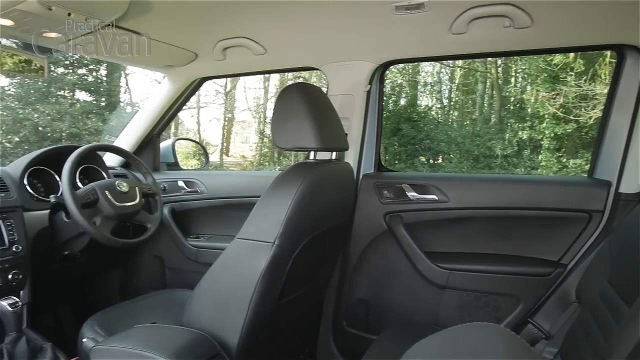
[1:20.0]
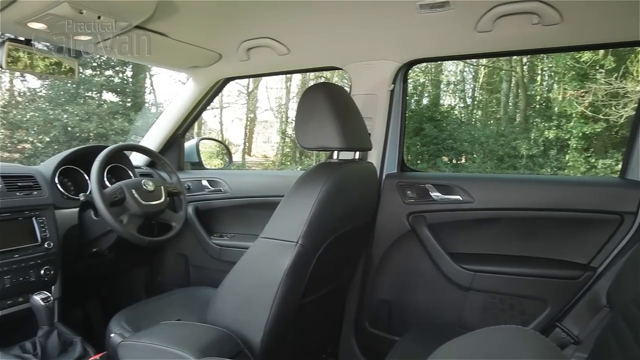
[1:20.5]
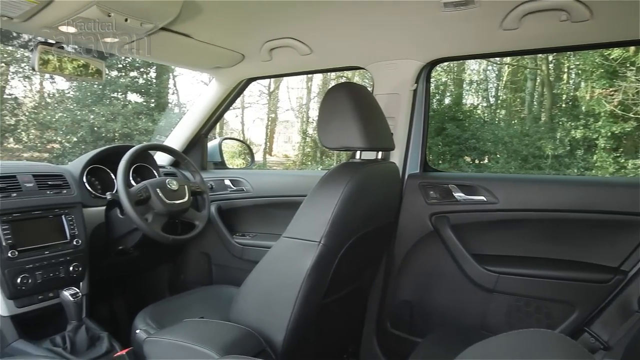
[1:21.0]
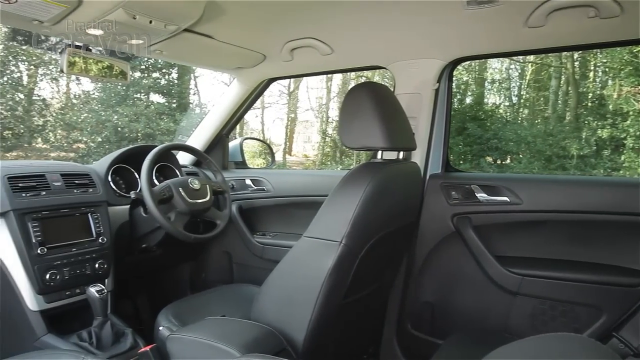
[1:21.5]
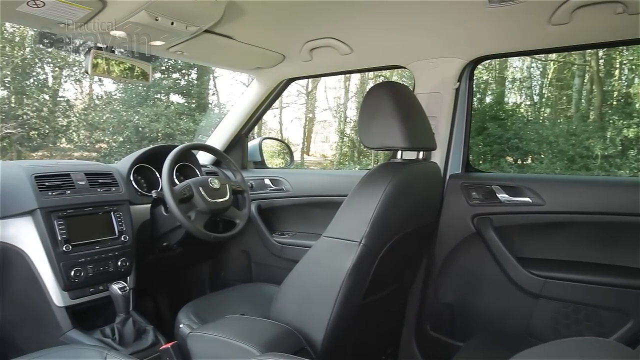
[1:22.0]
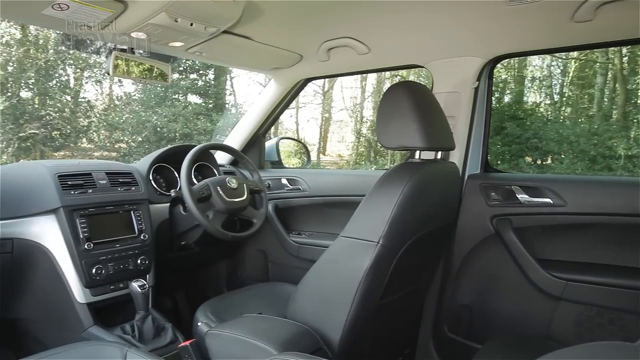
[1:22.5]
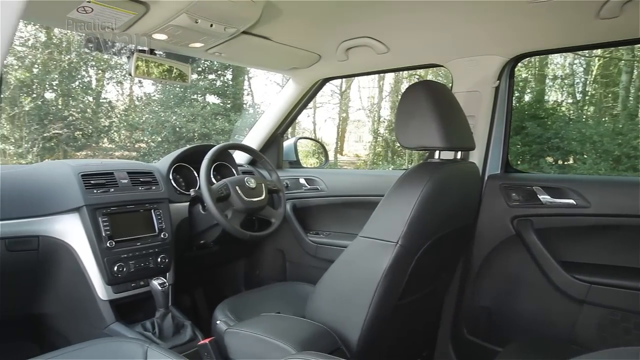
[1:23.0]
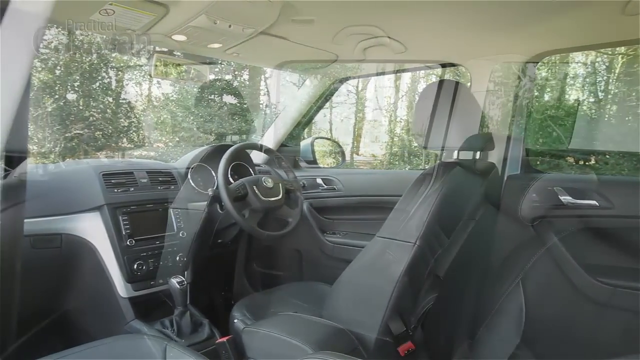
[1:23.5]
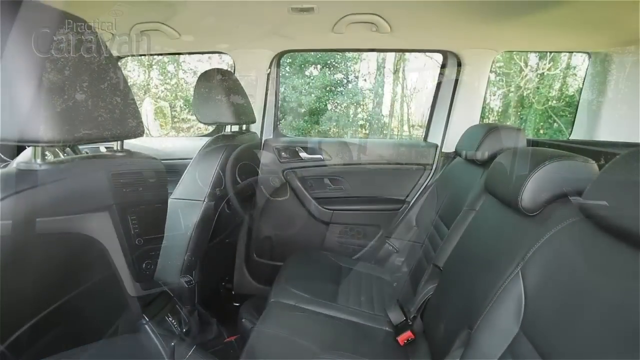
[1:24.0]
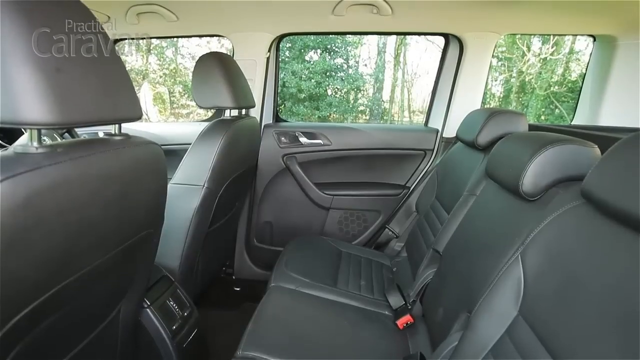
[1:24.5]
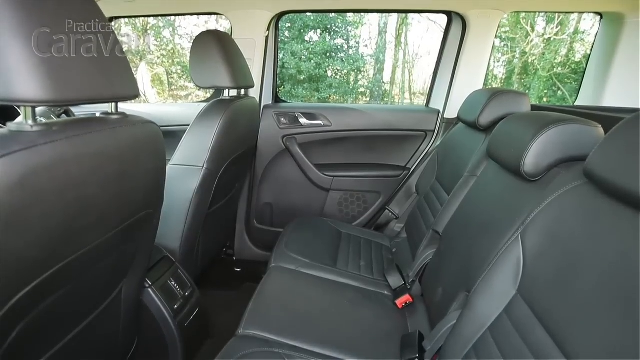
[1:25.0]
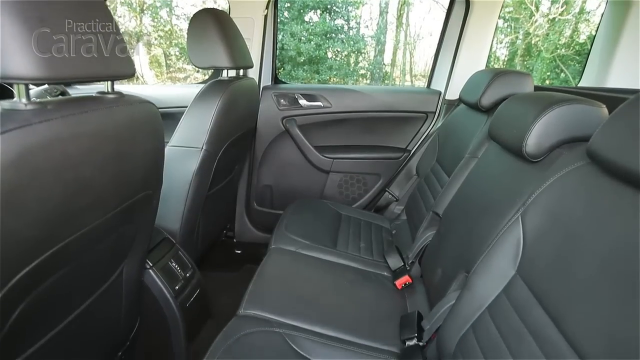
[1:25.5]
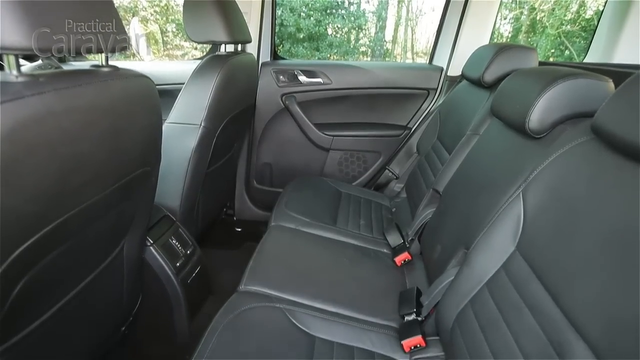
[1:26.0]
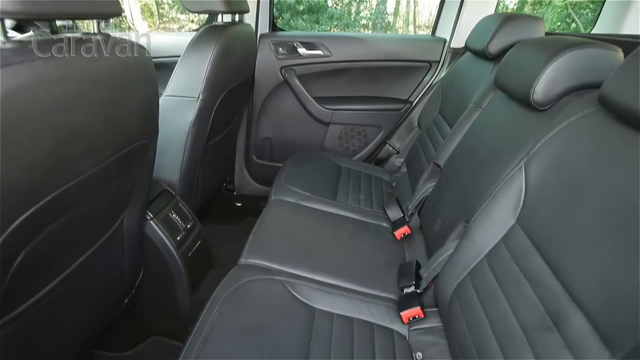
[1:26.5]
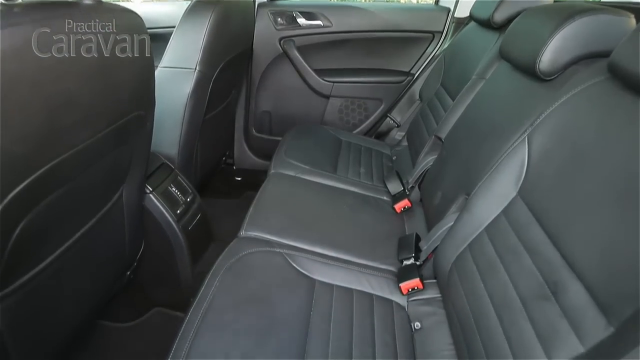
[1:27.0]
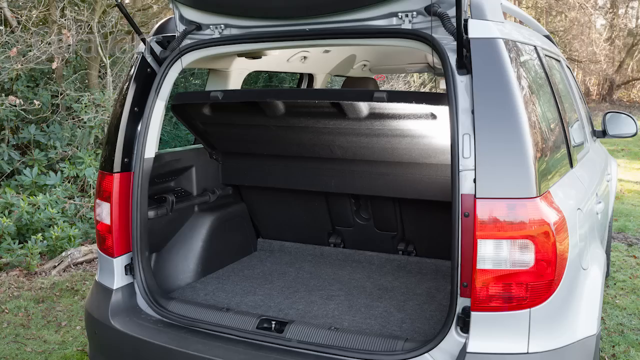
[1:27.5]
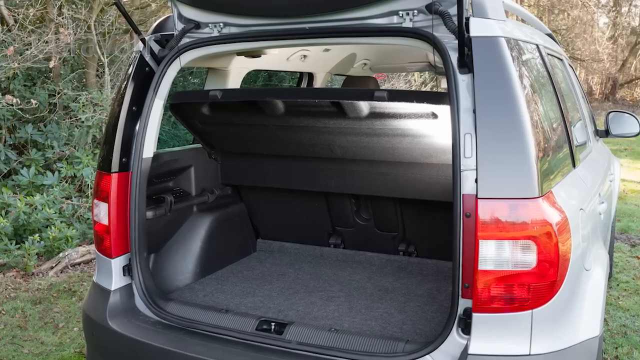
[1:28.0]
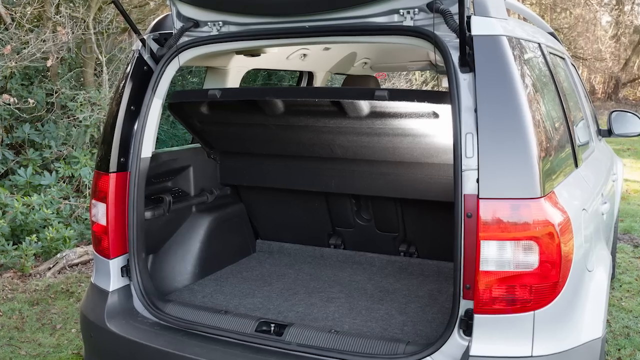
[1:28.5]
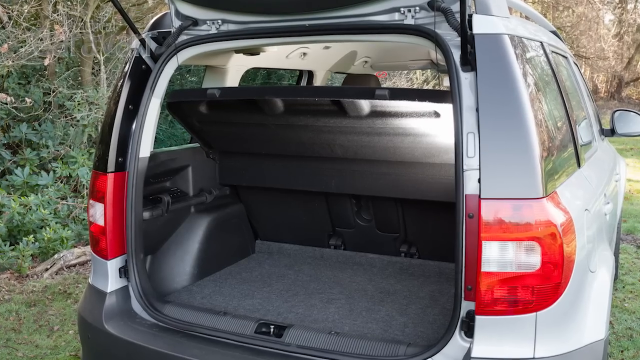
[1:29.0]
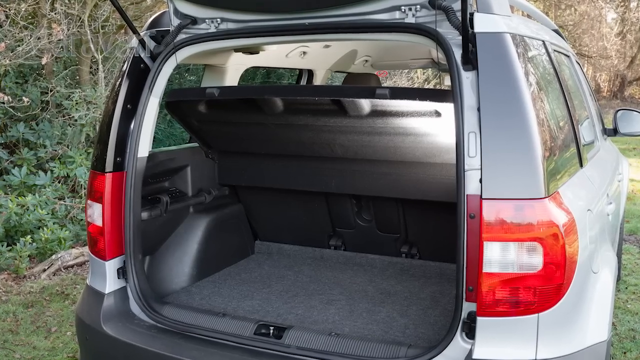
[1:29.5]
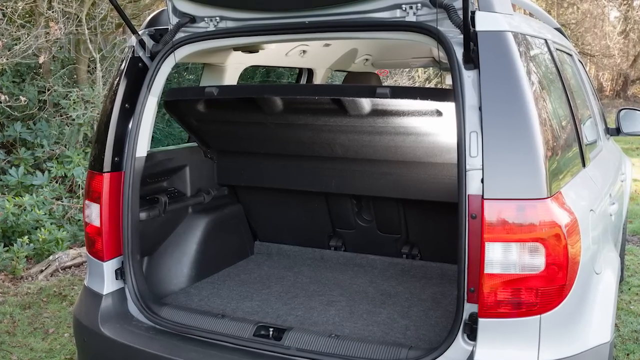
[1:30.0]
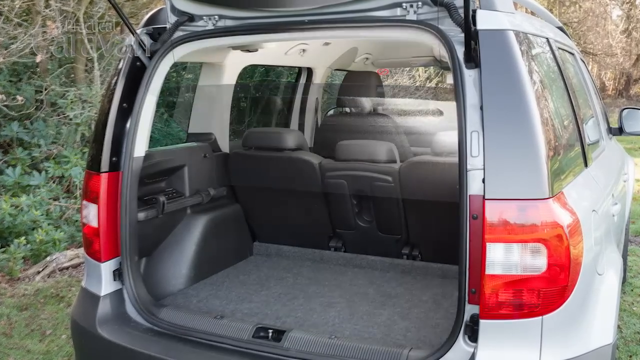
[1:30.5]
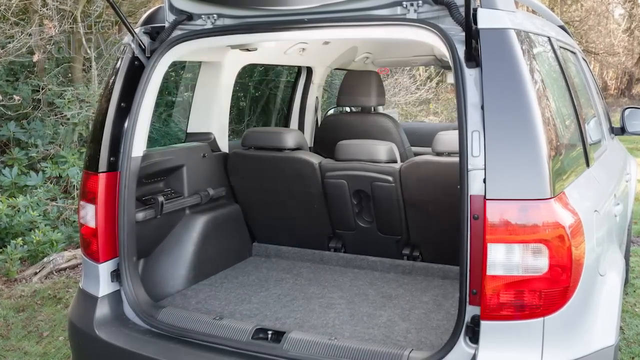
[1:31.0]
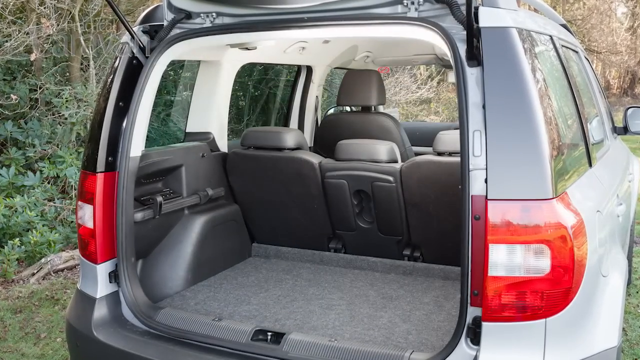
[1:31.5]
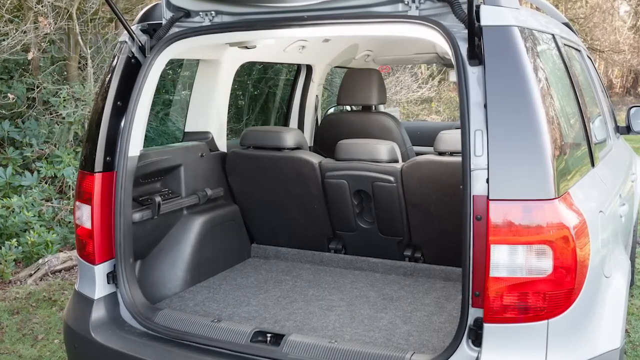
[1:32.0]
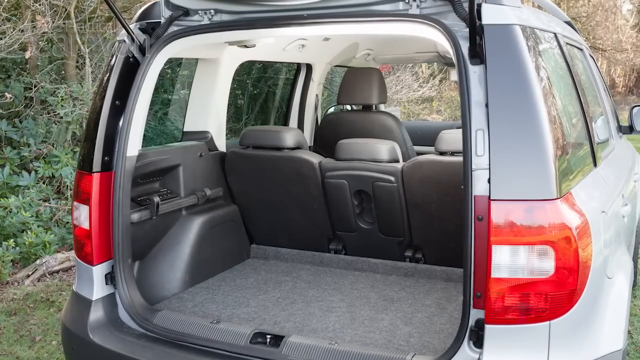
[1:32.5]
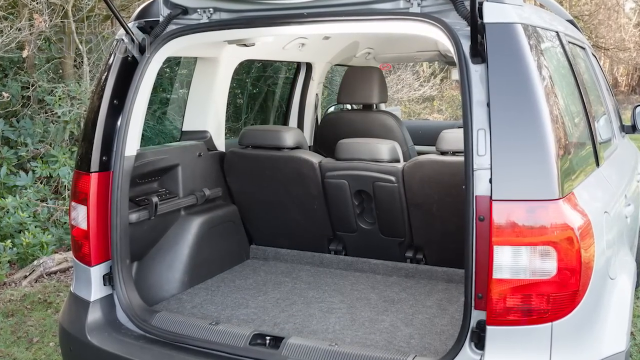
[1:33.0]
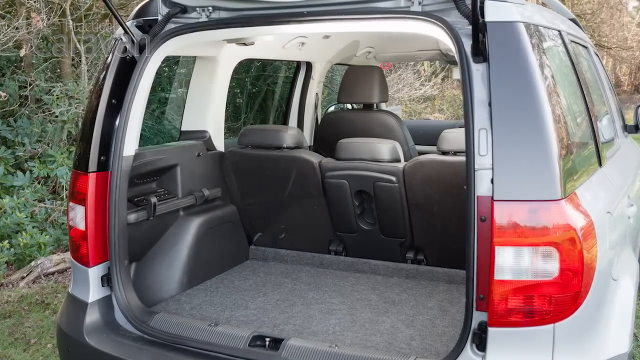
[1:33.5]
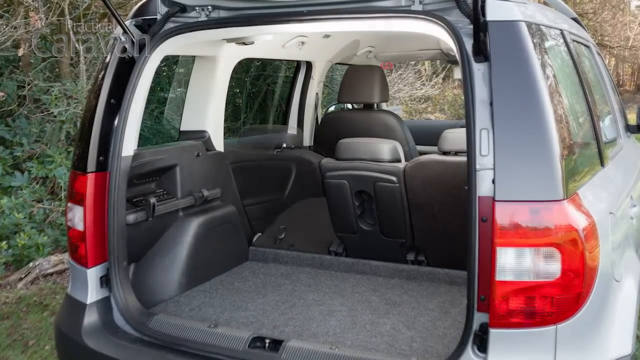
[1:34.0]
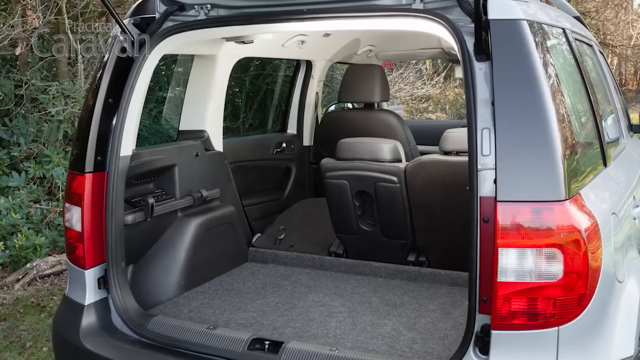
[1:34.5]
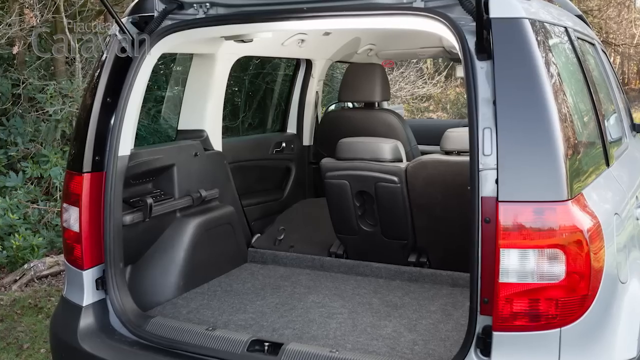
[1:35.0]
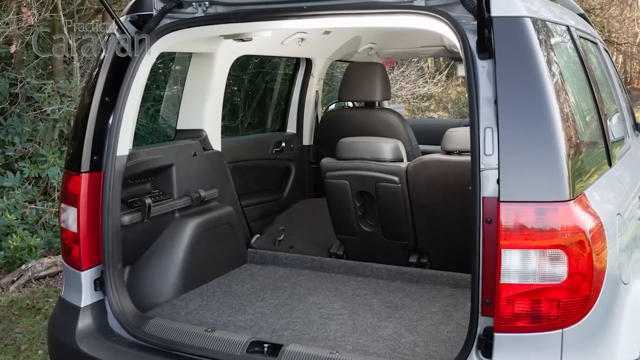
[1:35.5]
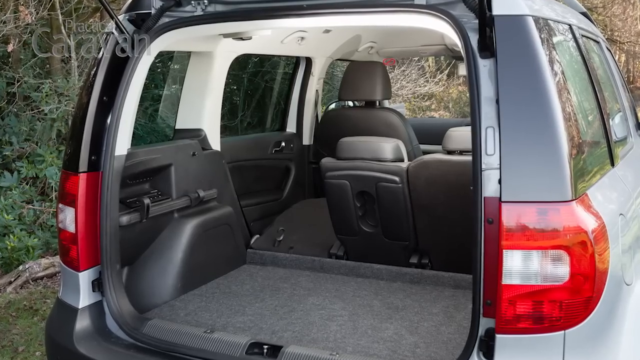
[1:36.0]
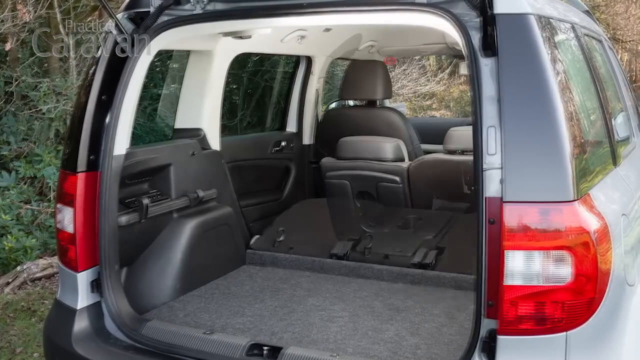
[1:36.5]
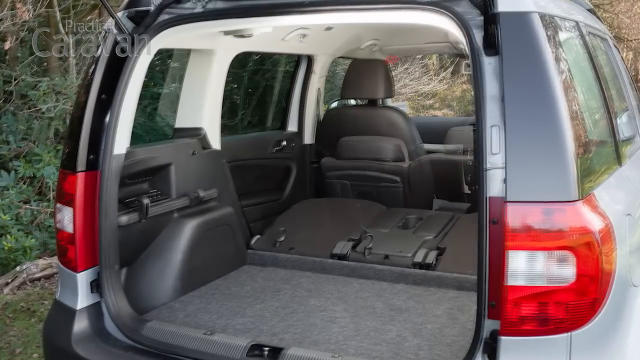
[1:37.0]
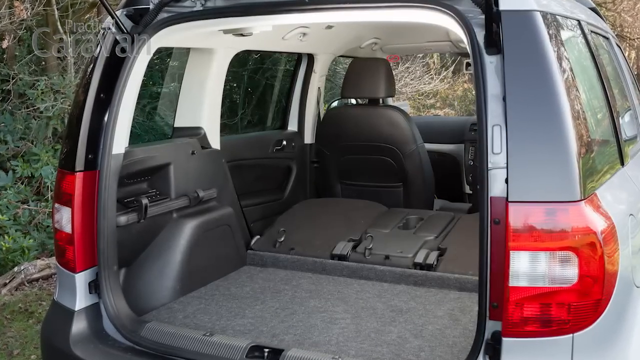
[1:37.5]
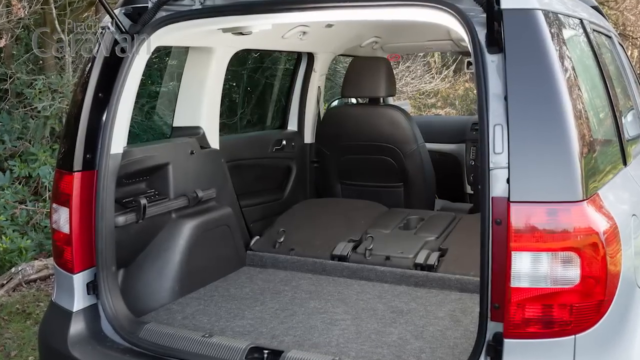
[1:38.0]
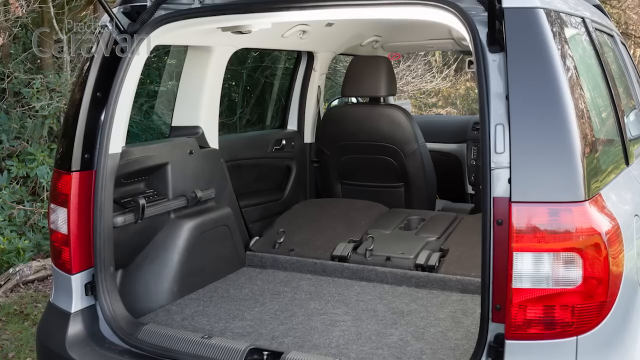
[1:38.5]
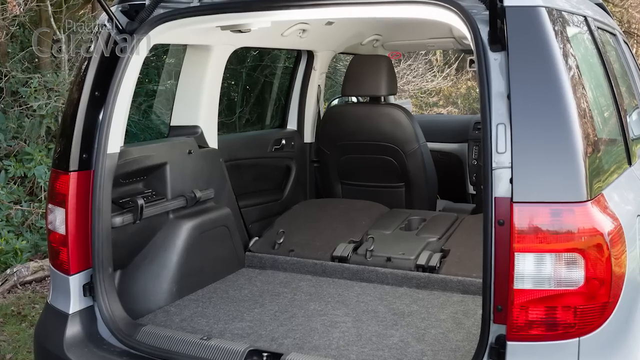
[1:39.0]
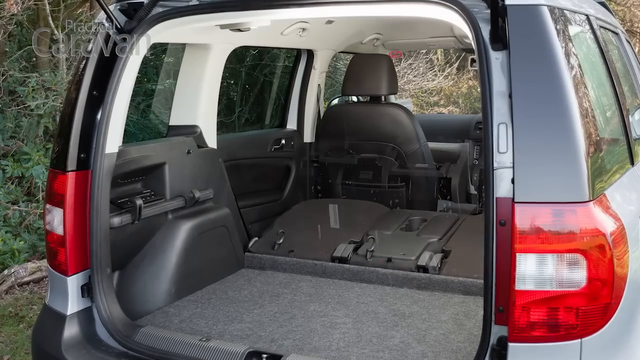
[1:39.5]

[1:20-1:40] Inside the car, the black interior is visible. The camera swings to the left very slowly and deliberately, showing the steering wheel and the dashboard. It cuts to the back seats, three seats kind of combined together. Then the trunk is shown with the back door open, empty. The trunk has a compartment under the floor that can be raised: first the floor part is shown open, then closed. The seats are then folded forward, starting with the left seat, and finally all of the seats are folded forward, leaving a lot of trunk space.